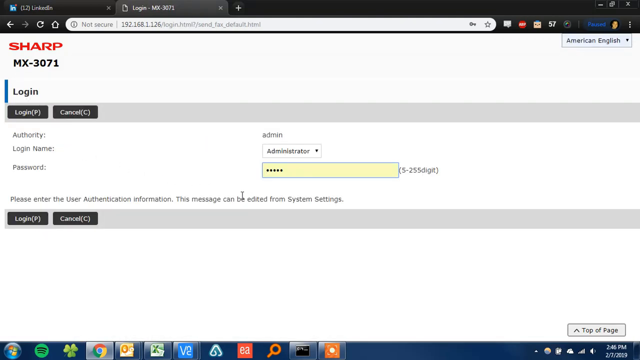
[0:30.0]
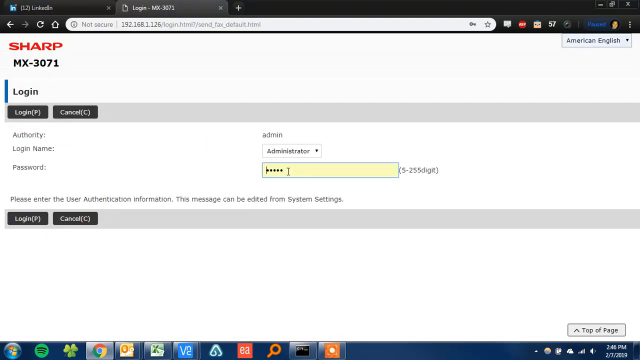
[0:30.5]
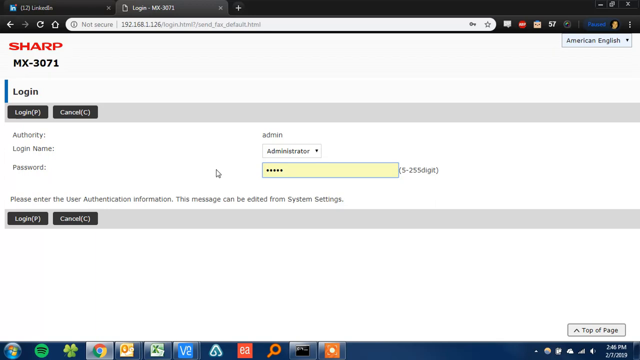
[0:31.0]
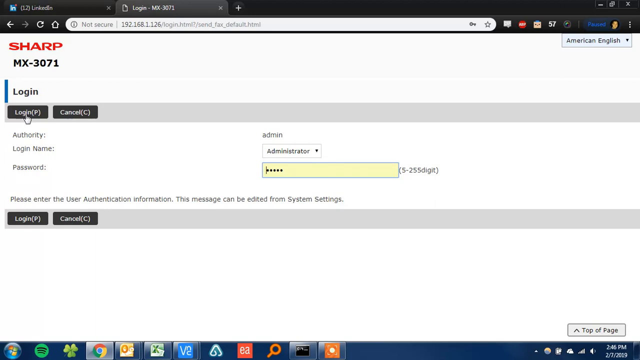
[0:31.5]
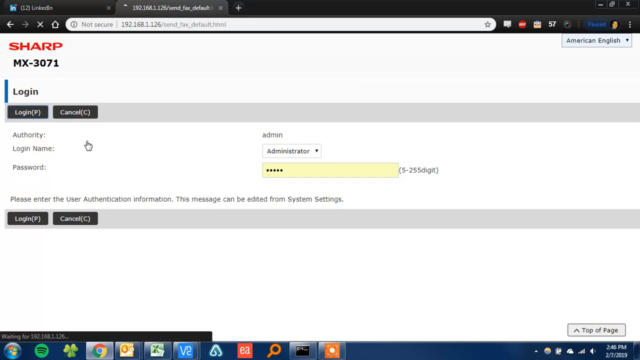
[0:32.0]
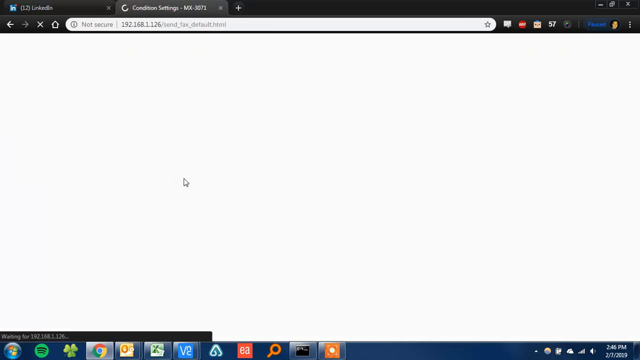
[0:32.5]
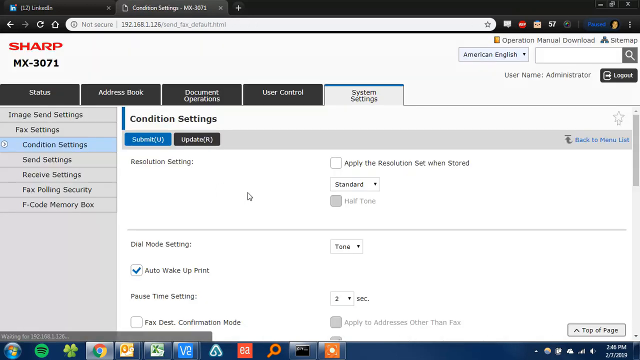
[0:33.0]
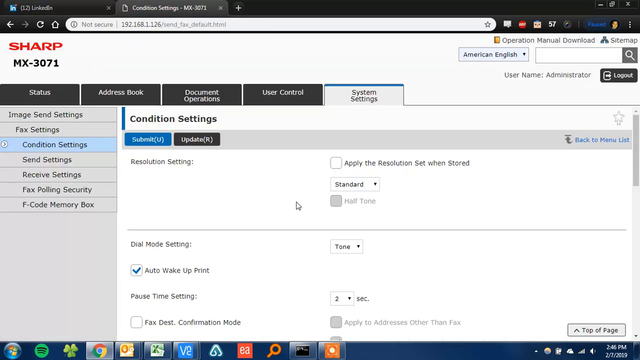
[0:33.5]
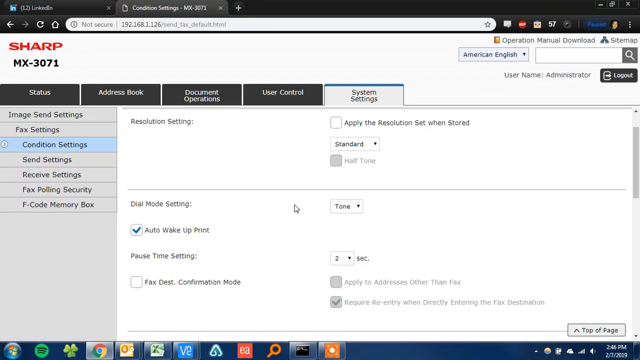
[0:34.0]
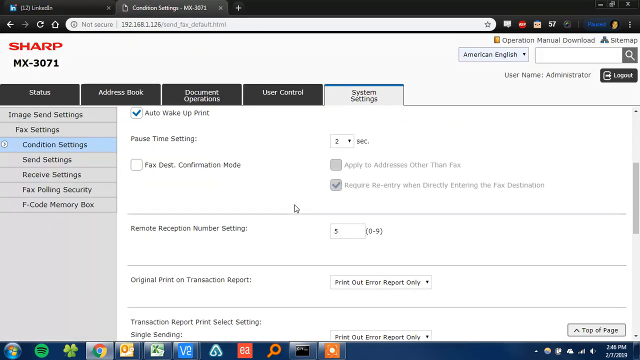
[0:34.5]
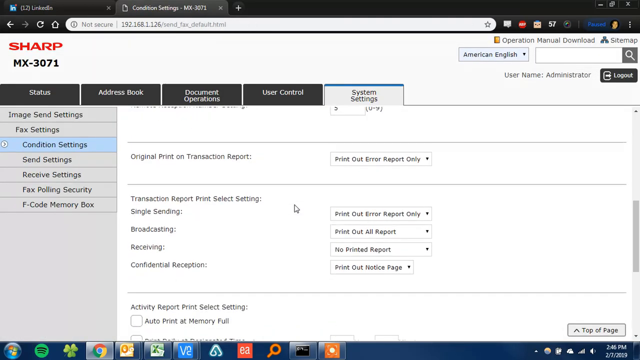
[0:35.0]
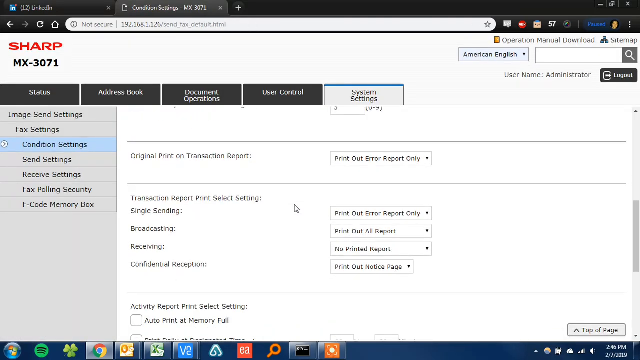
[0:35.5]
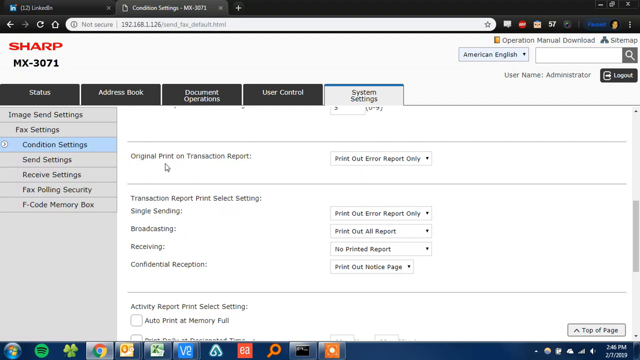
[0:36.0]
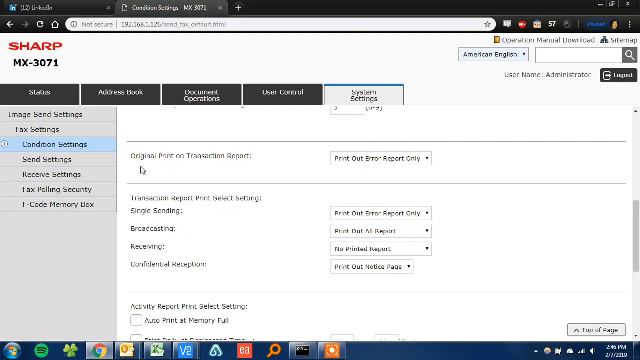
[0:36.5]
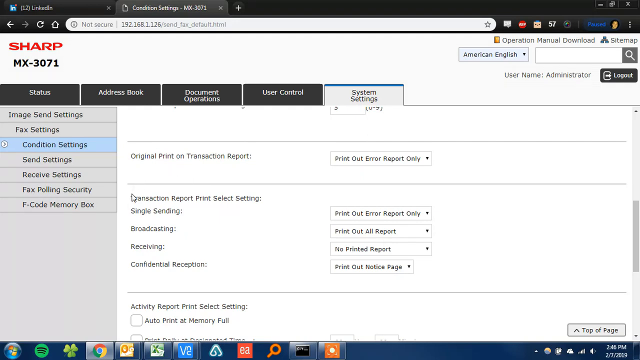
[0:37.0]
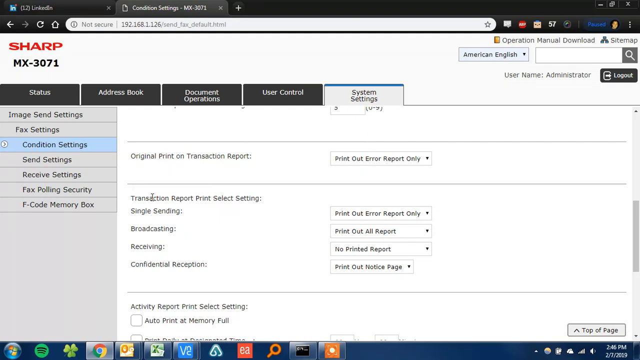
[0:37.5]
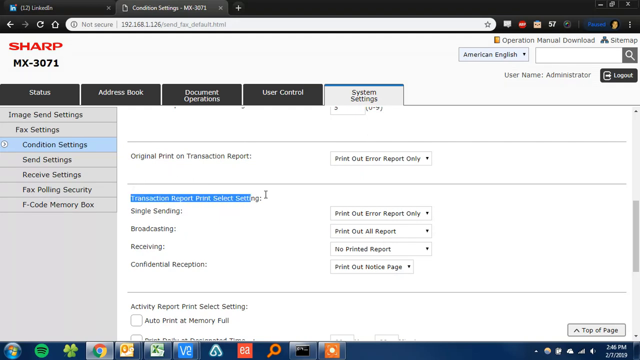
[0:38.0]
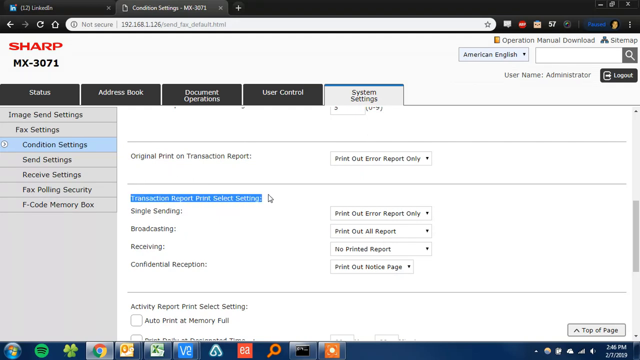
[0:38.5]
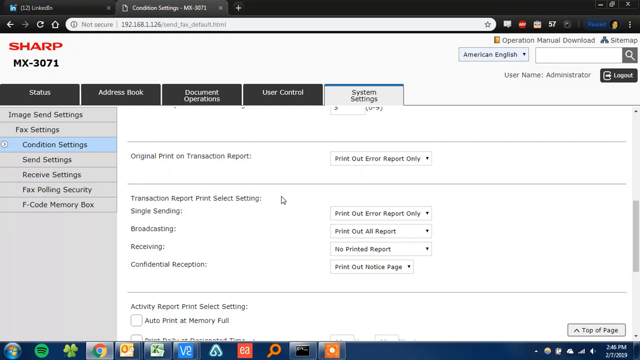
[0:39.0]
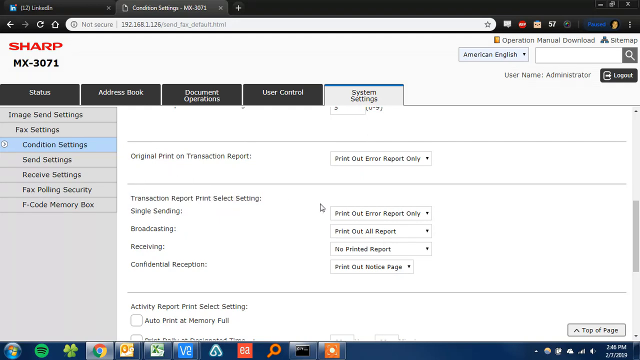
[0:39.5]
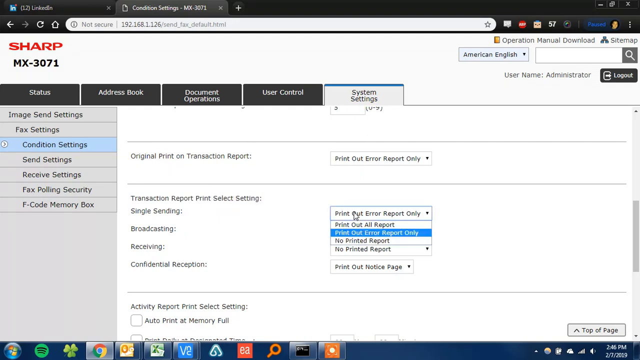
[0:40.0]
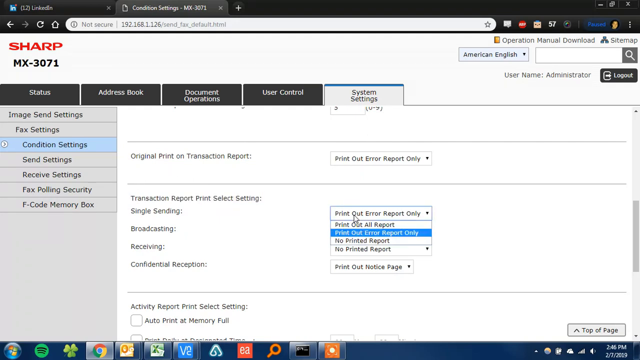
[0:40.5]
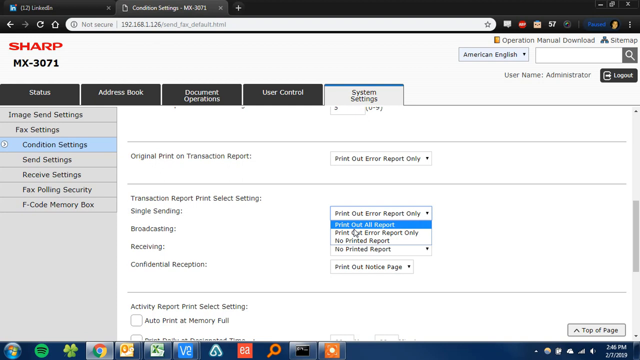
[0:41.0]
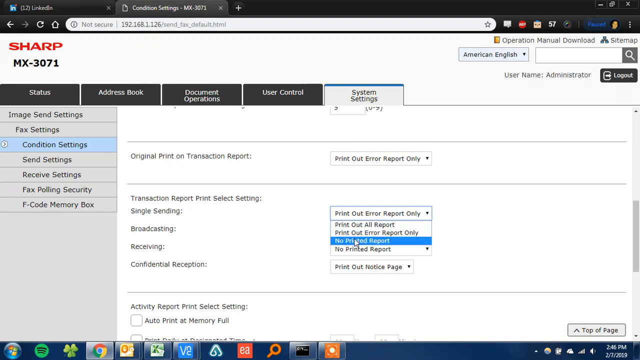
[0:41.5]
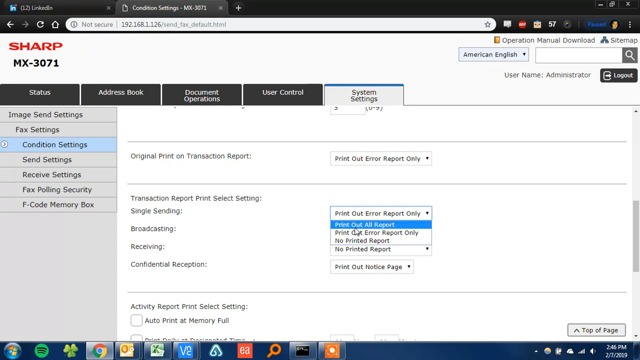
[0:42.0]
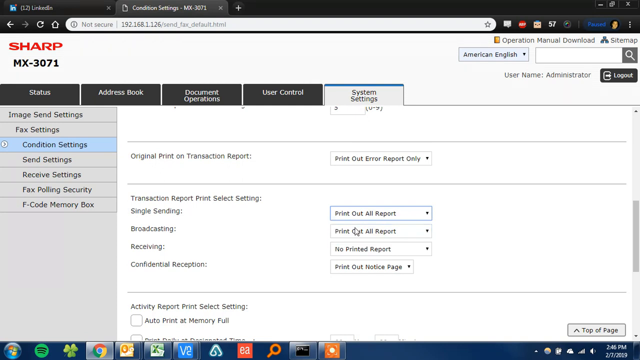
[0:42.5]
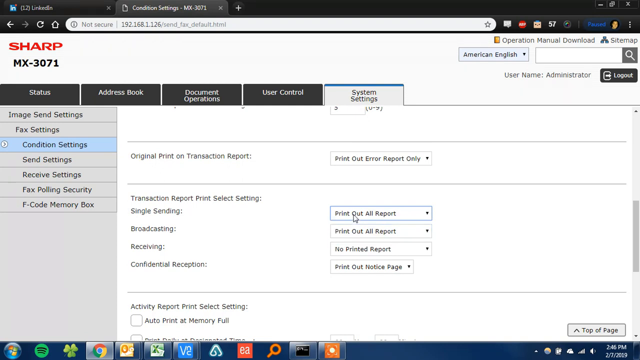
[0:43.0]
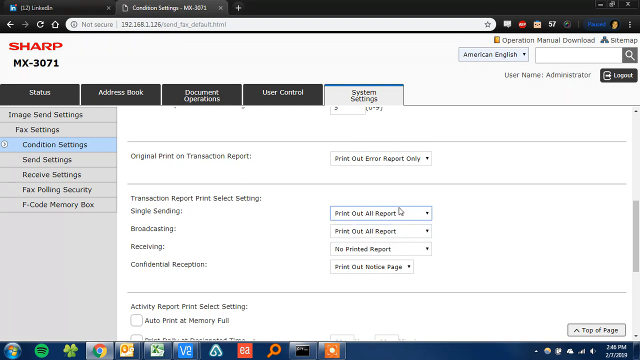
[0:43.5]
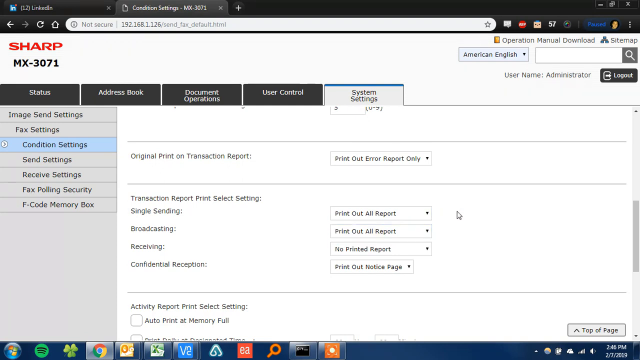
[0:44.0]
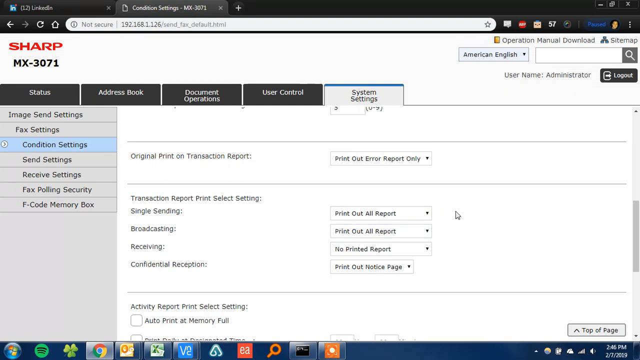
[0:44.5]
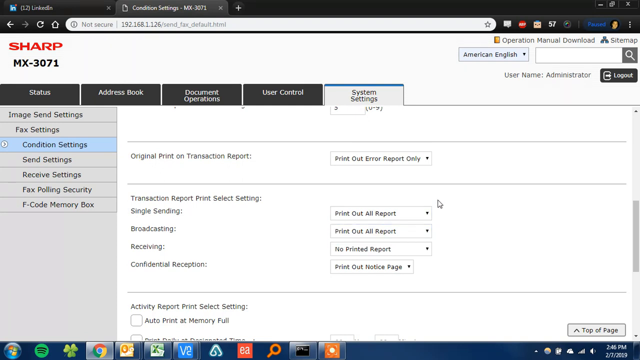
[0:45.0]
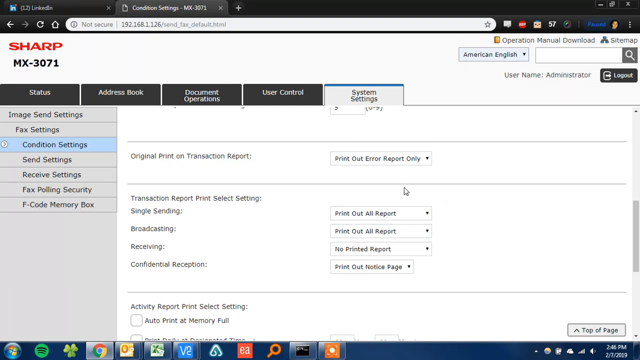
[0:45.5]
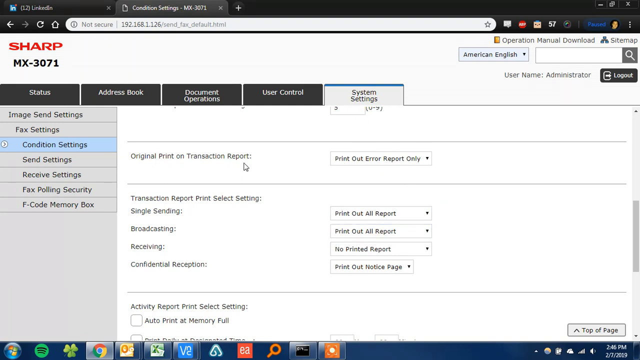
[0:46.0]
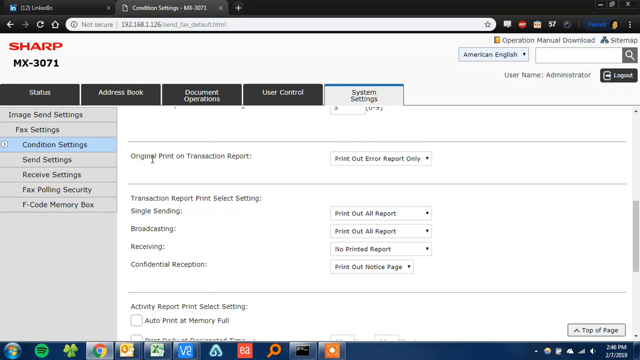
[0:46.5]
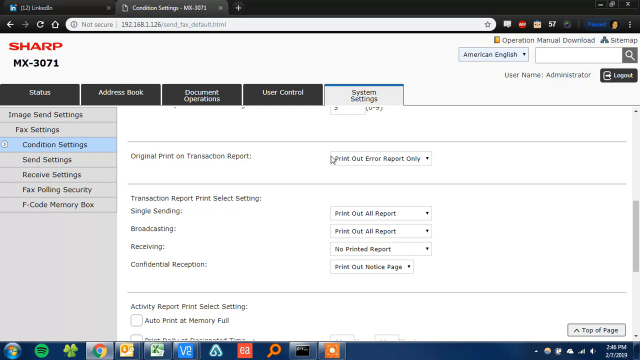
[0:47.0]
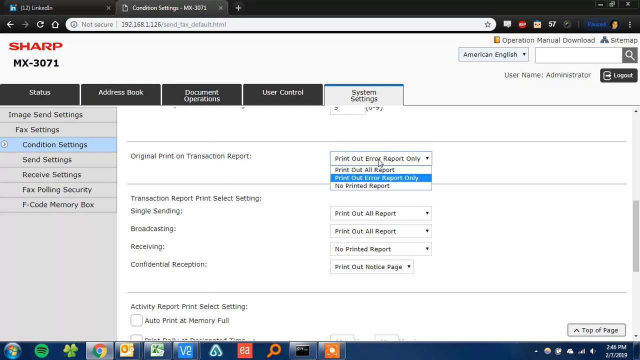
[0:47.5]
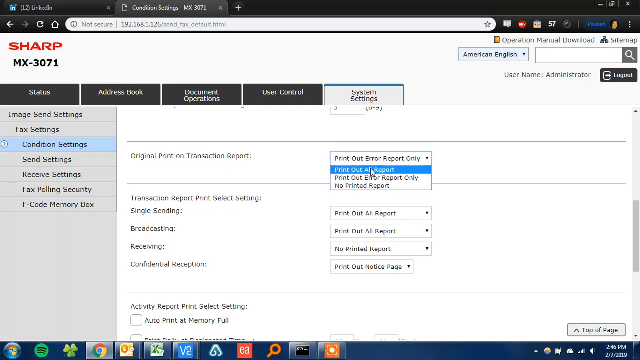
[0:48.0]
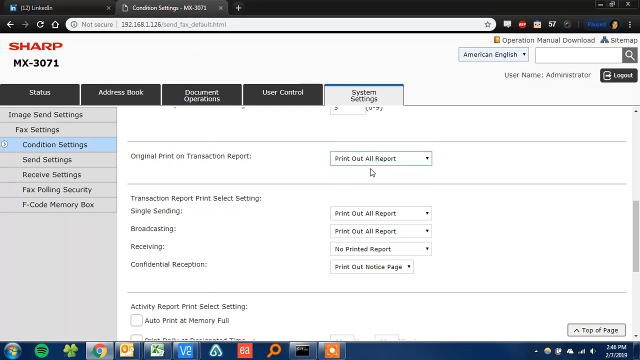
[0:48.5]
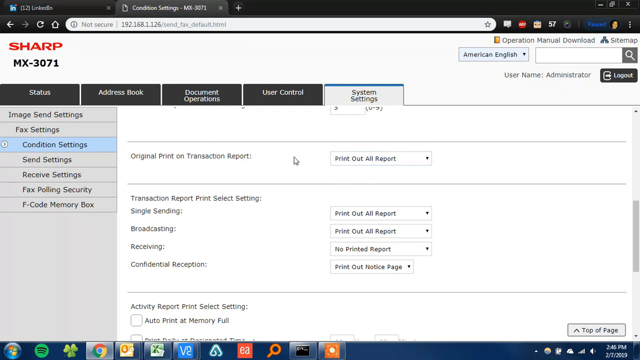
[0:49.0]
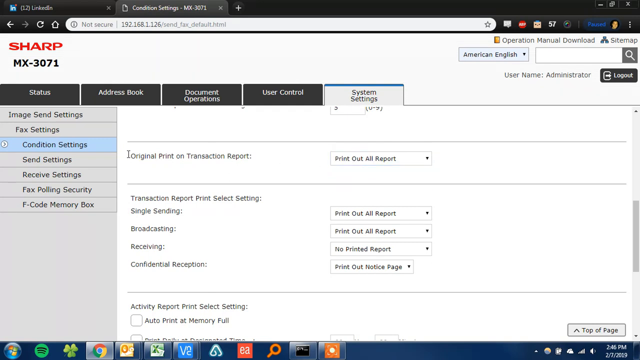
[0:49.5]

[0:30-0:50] Still on the Sharp website for the equipment, the user is on a login page with login and cancel options. Under authority it says "admin", and under login name, a drop-down menu, it says "administrator". The password field allows anywhere from 5 to 255 digits, and the user appears to enter a password, which shows up as black circles. They click login and are taken into the system settings, where they scroll down through the options. They move the mouse to original print on transaction report and highlight transaction report print select setting. A drop-down menu there has "print out error report only" selected, and they change it to "print out all report". They then change the other setting to "print out all report" as well.